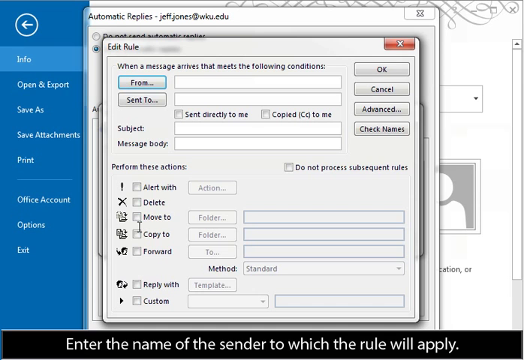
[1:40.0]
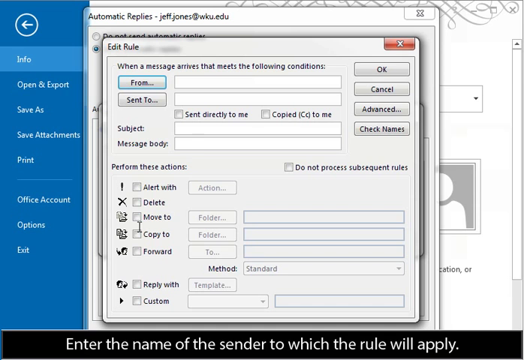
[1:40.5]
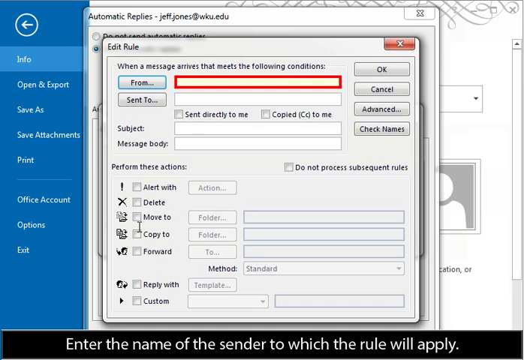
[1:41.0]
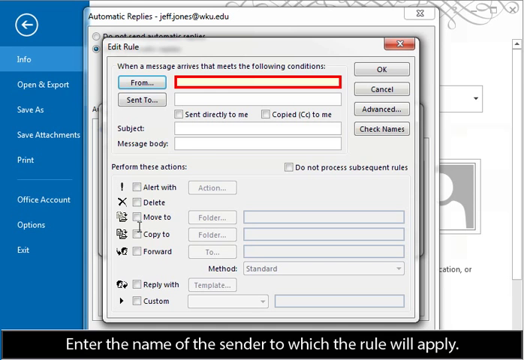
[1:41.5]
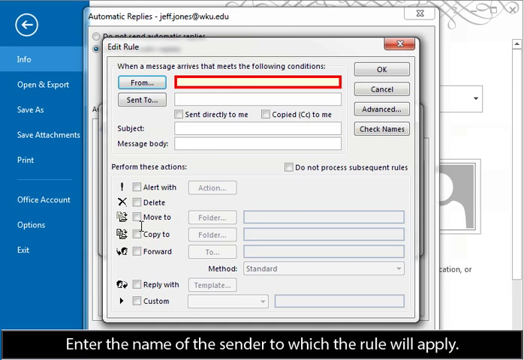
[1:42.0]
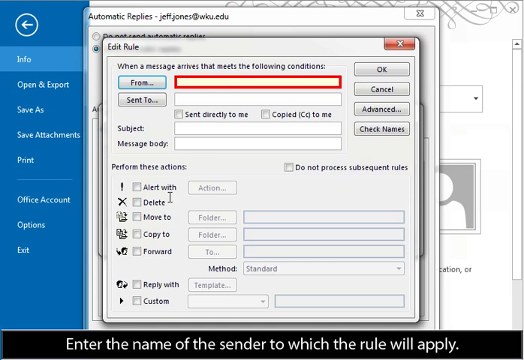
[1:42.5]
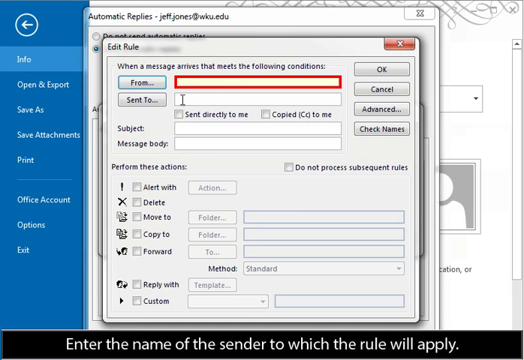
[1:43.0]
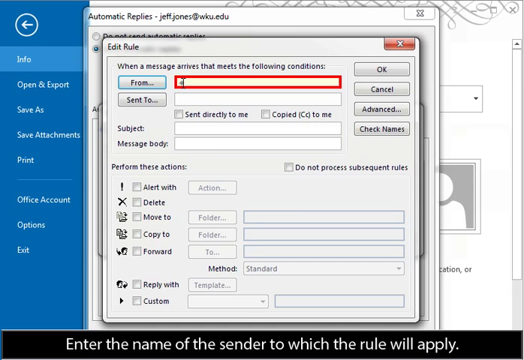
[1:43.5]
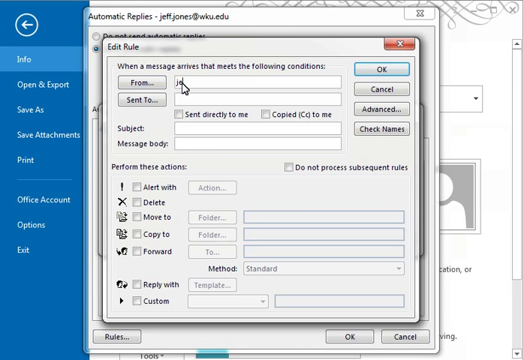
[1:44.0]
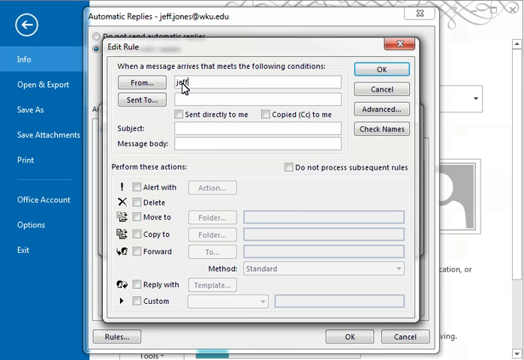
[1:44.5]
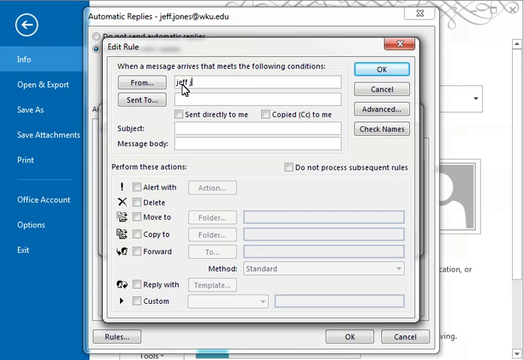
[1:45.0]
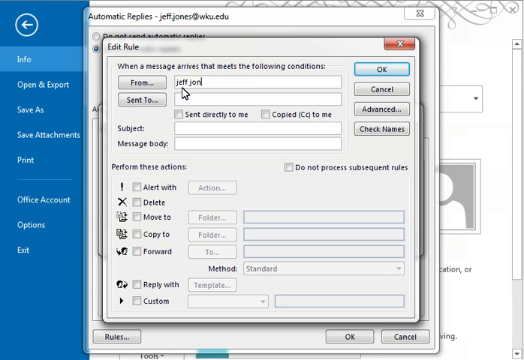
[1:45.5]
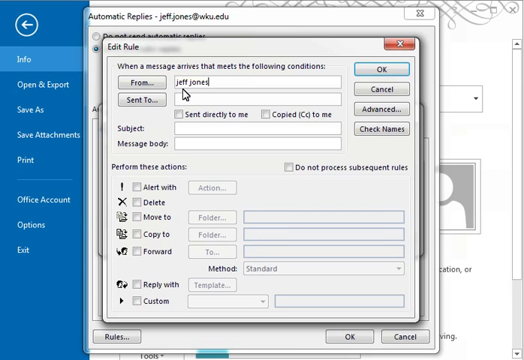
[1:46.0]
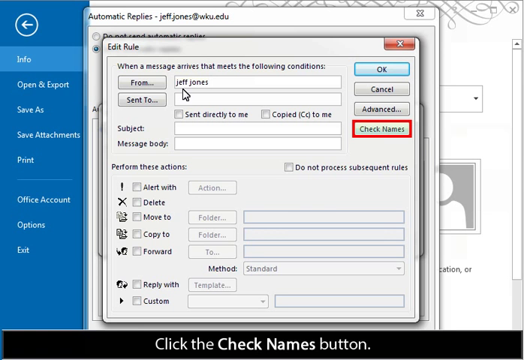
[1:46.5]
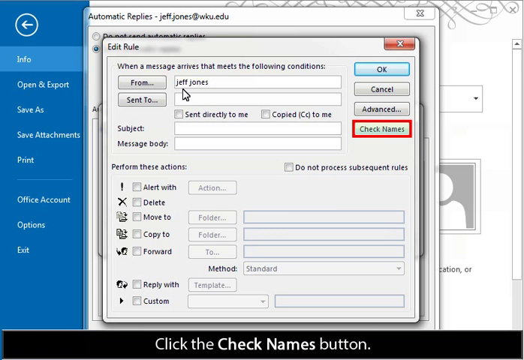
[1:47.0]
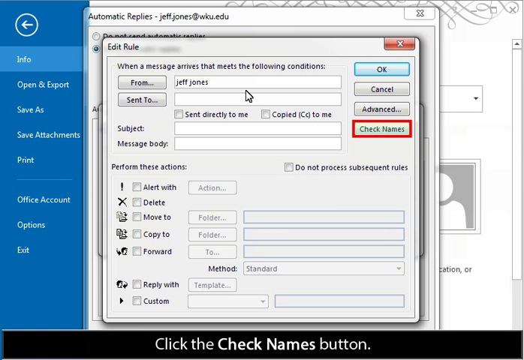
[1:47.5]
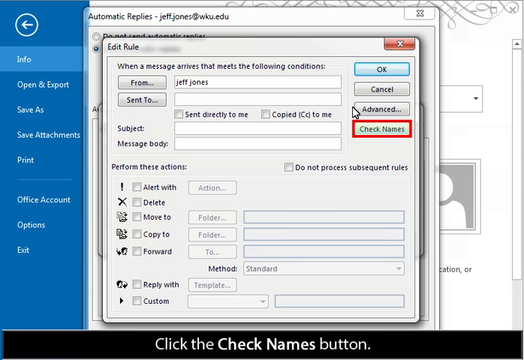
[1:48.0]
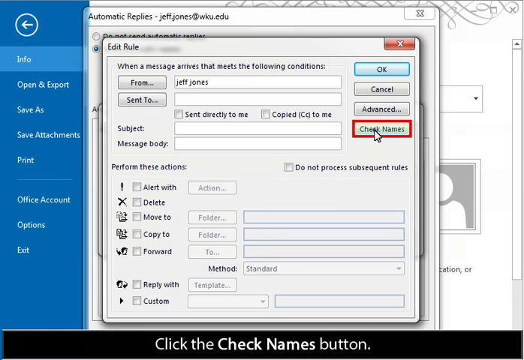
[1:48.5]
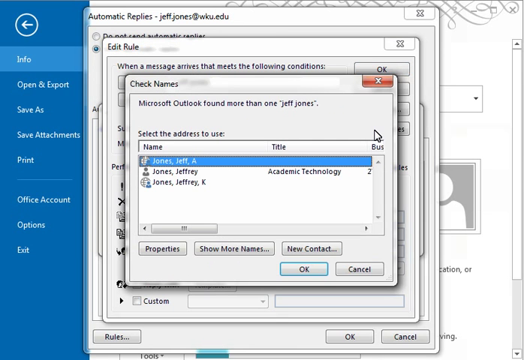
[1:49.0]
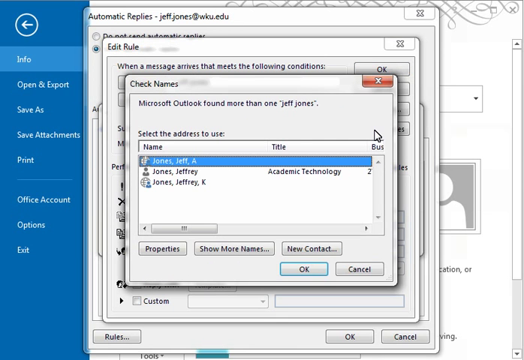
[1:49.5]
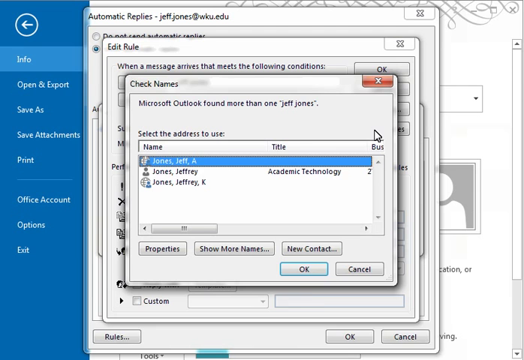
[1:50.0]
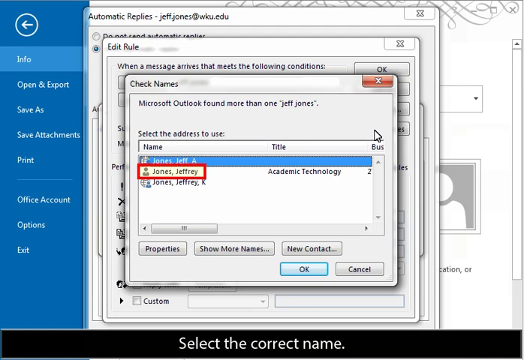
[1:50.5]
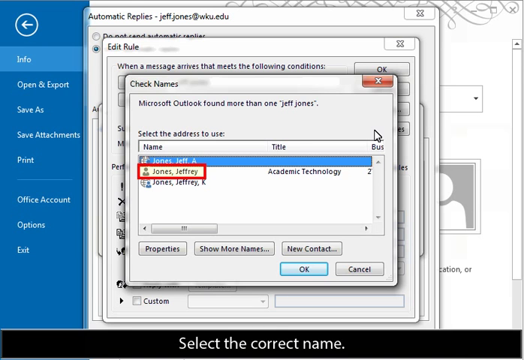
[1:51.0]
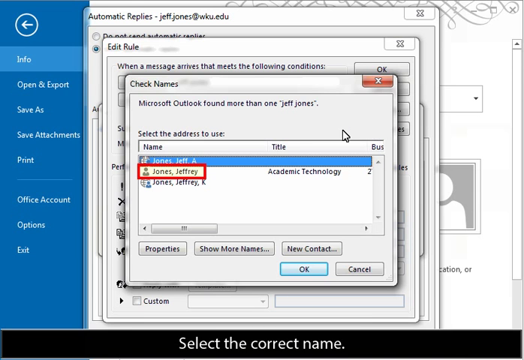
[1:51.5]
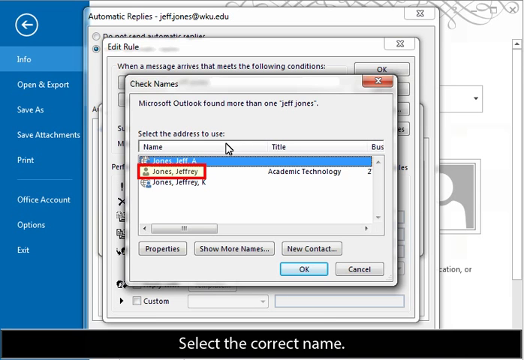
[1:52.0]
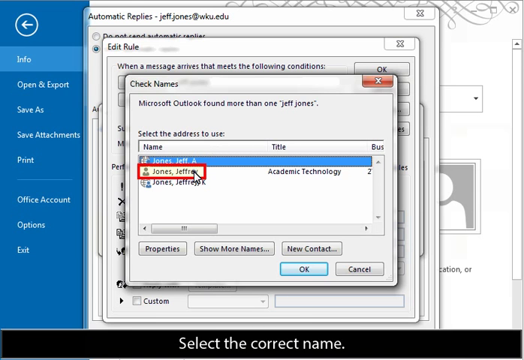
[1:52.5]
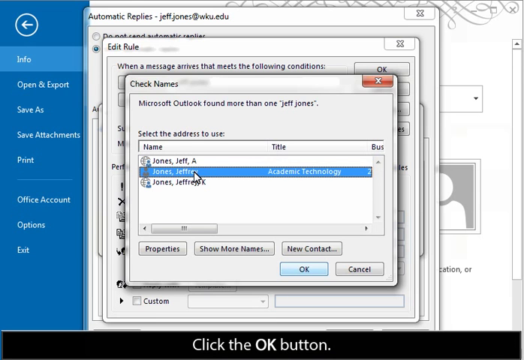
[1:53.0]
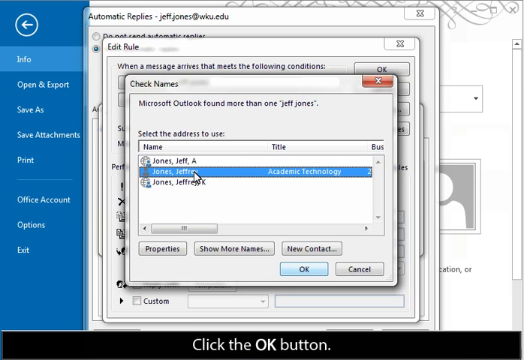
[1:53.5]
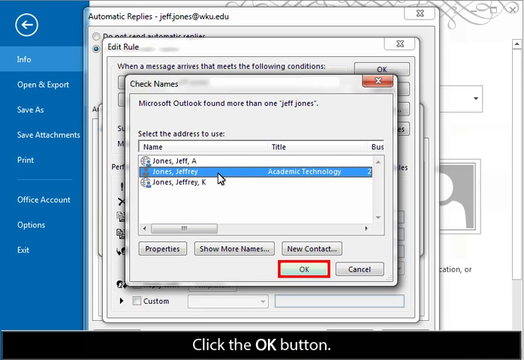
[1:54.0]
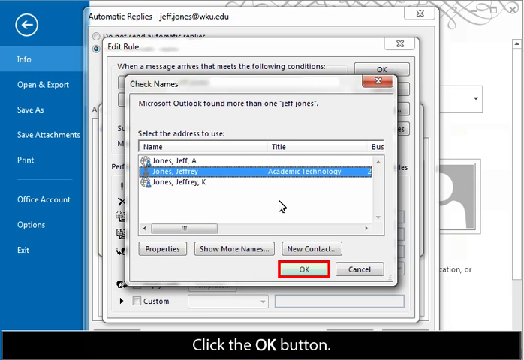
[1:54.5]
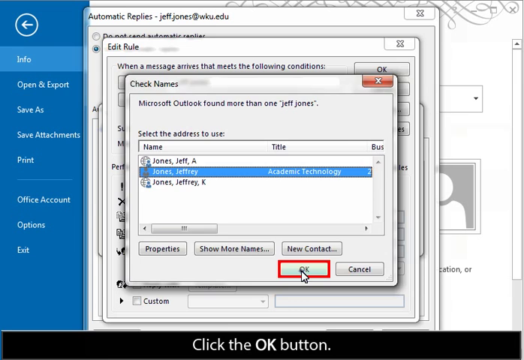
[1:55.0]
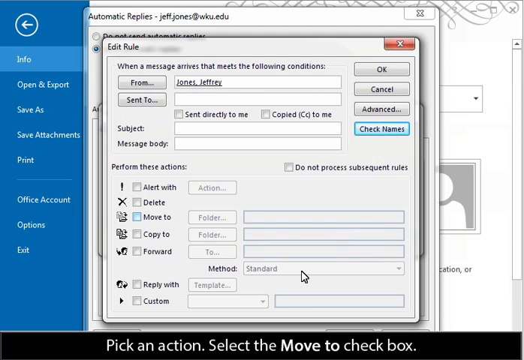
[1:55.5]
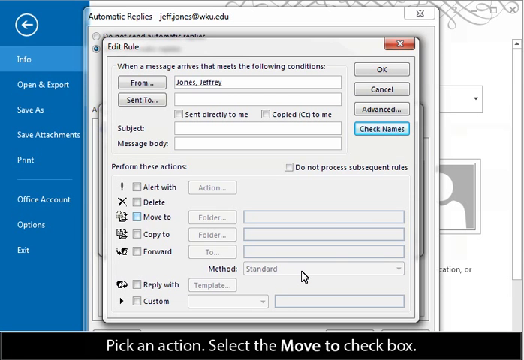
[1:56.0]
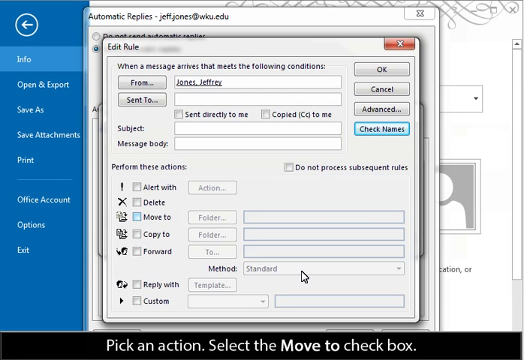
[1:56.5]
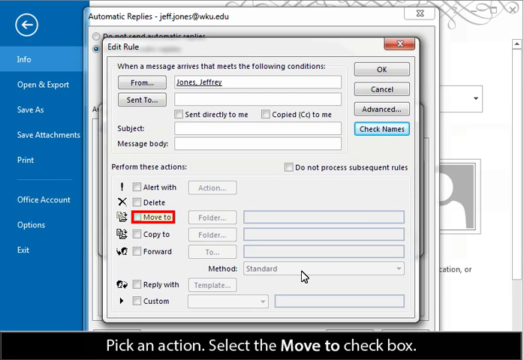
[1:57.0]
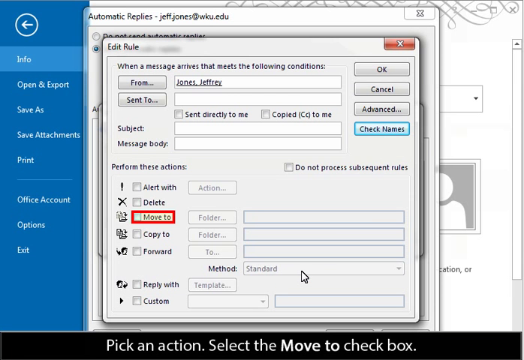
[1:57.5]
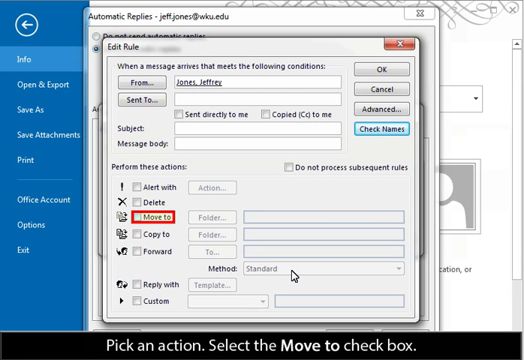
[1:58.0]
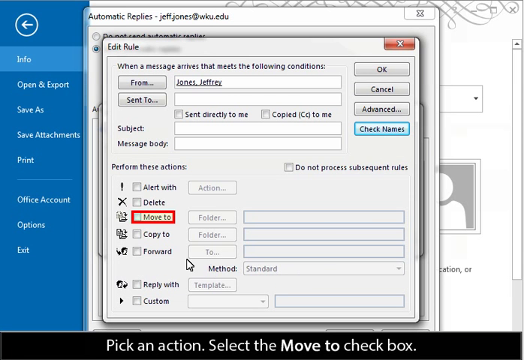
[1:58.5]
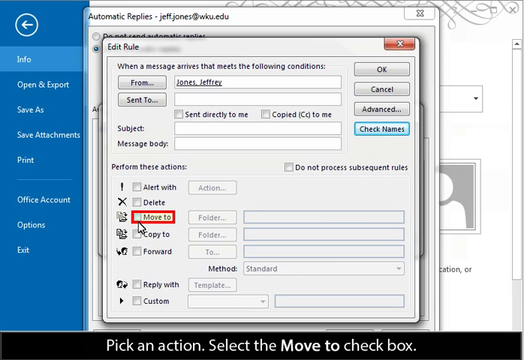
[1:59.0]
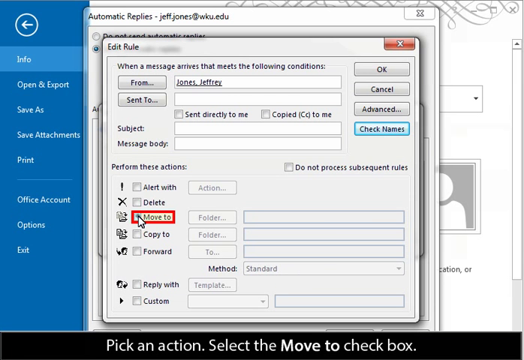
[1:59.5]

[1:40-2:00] A page from the out-of-office assistant is titled "Edit Rule" at the top. Near the top it says "when a message arrives that meets the following conditions," followed by "from" and "sent to" fields. There are checkable options "Send Directly to Me" and "Copied to Me," and fields for "Subject" and "Message Body." Below, under "perform these actions," are checkable options "Alert With," "Delete," "Move To," "Copy To" and "Forward," and under those "Reply With" and "Custom." At the top right of the page are buttons labeled "OK," "Cancel," "Advanced" and "Check Names."